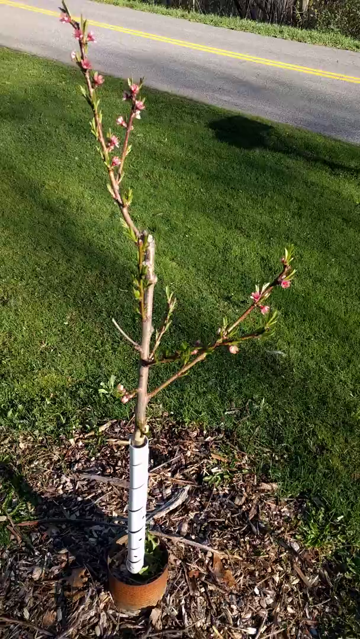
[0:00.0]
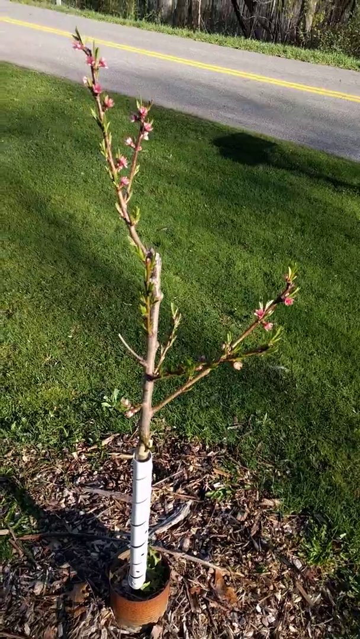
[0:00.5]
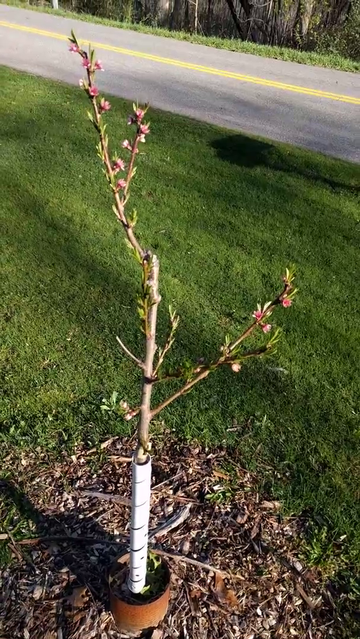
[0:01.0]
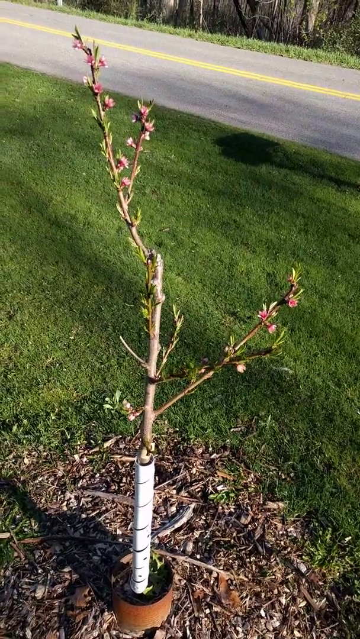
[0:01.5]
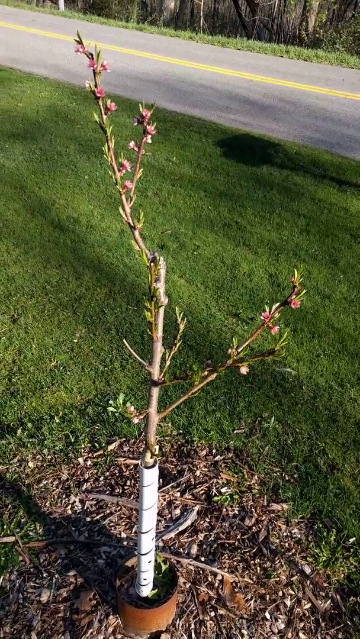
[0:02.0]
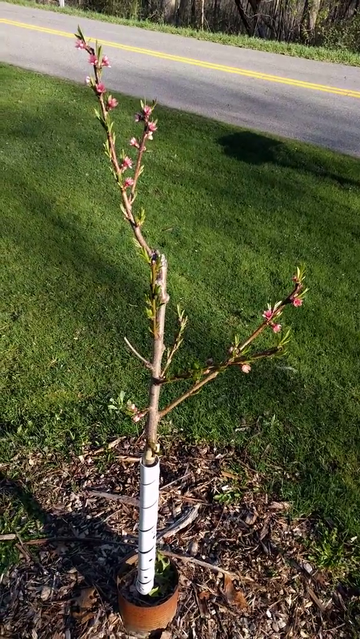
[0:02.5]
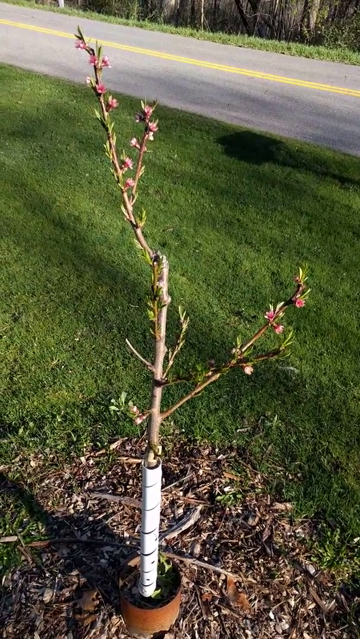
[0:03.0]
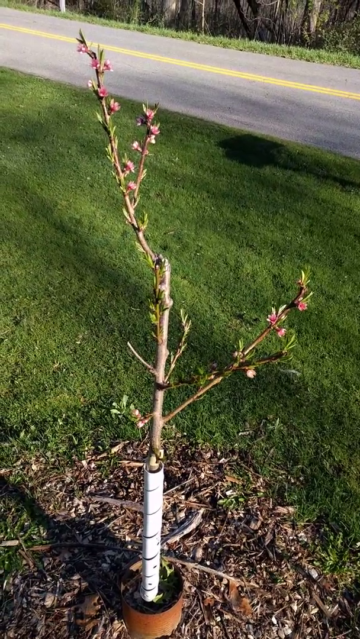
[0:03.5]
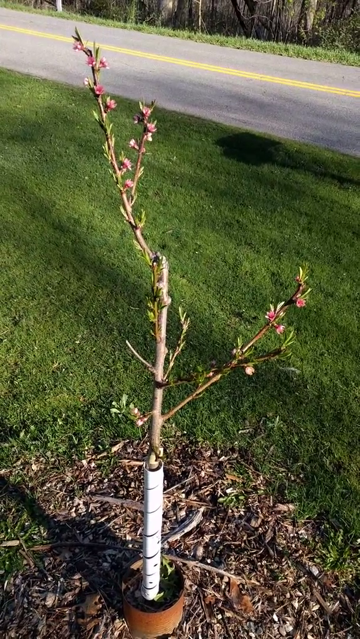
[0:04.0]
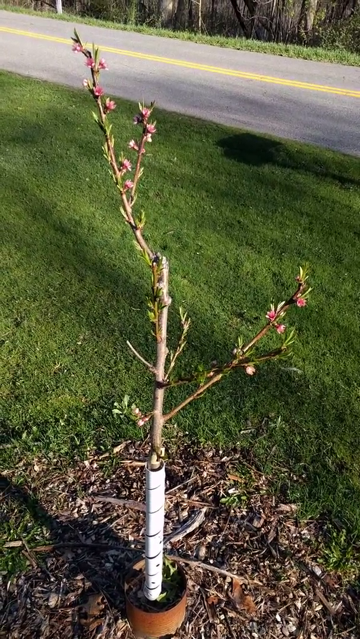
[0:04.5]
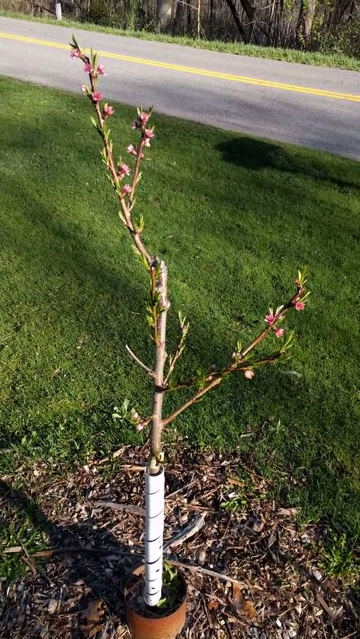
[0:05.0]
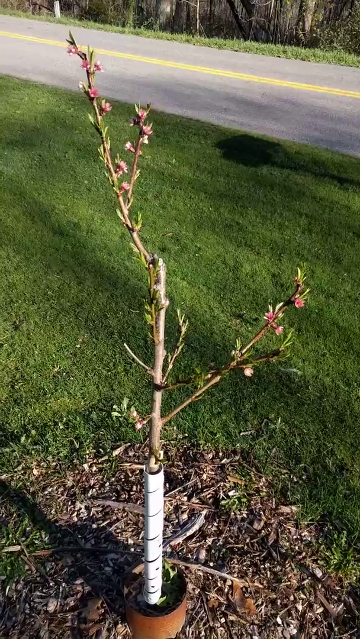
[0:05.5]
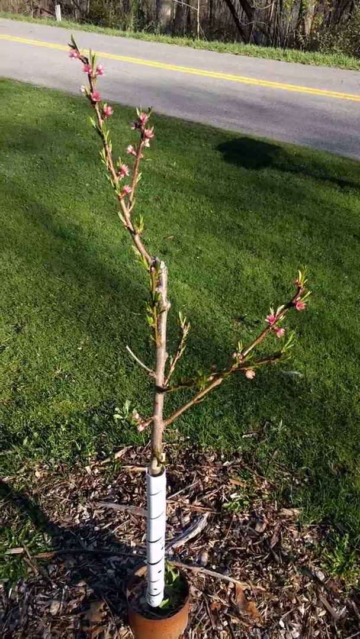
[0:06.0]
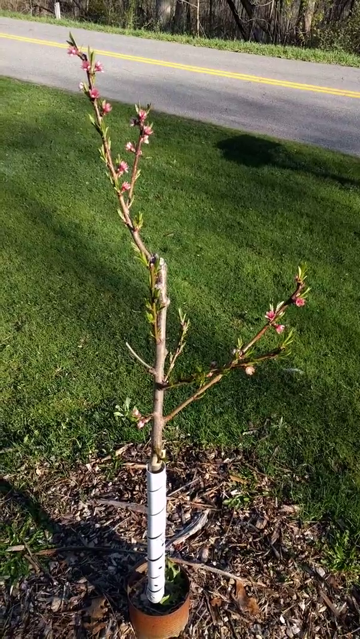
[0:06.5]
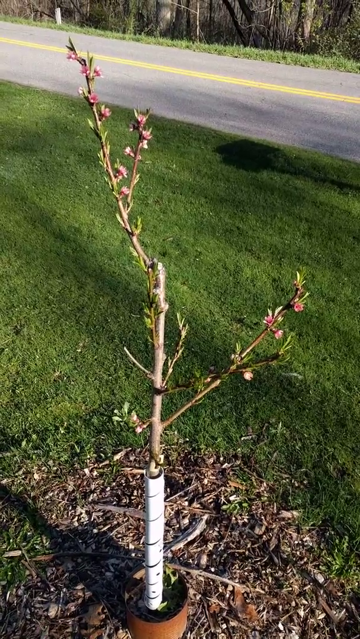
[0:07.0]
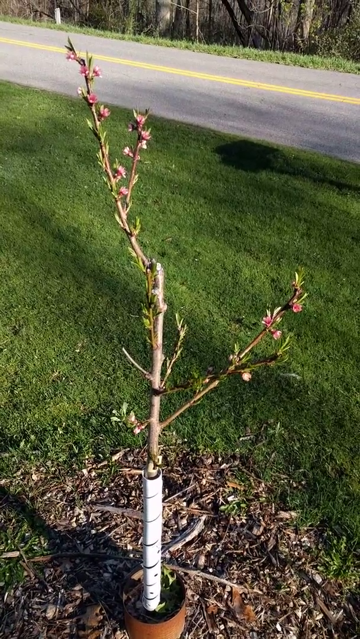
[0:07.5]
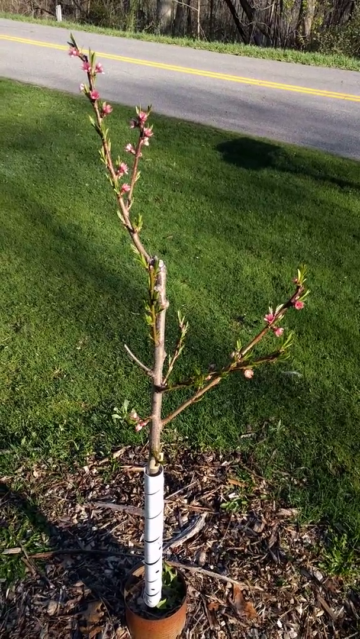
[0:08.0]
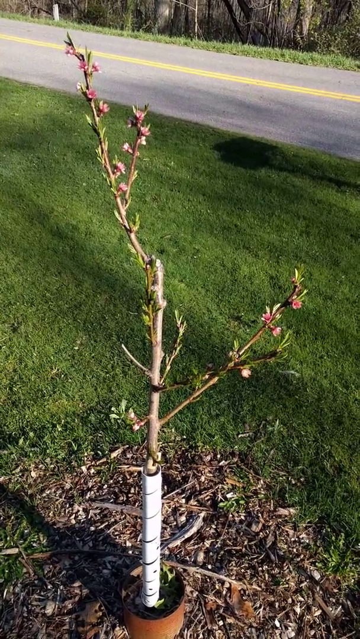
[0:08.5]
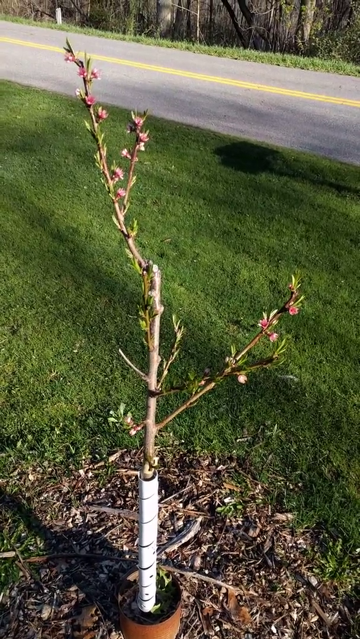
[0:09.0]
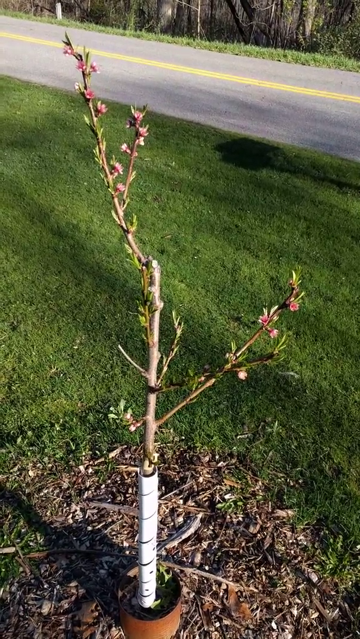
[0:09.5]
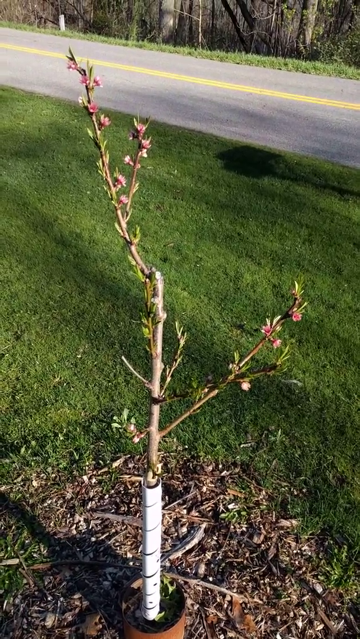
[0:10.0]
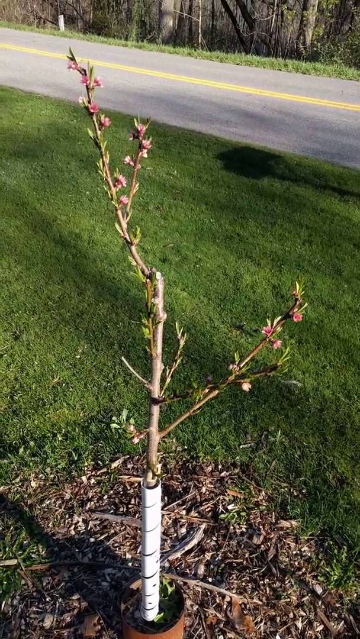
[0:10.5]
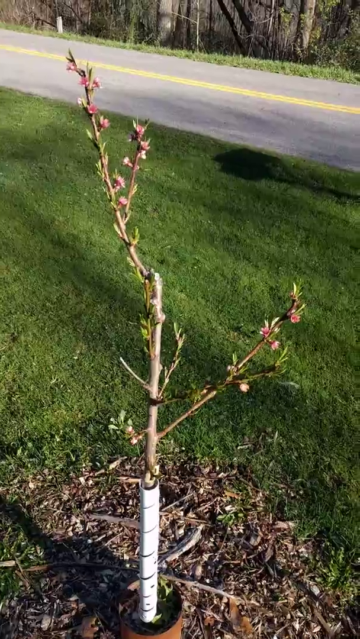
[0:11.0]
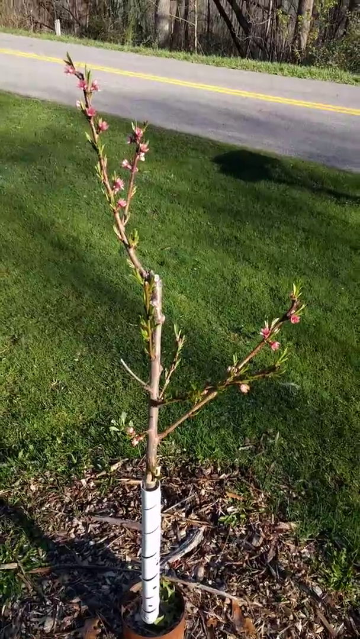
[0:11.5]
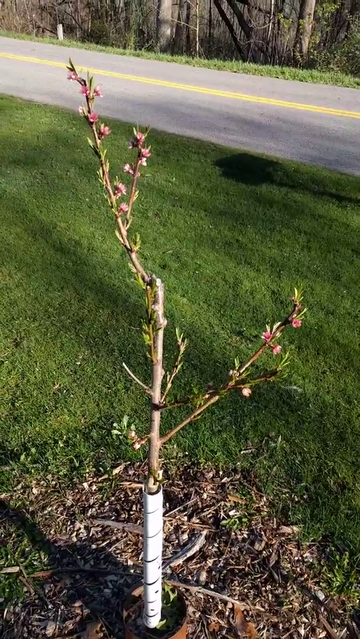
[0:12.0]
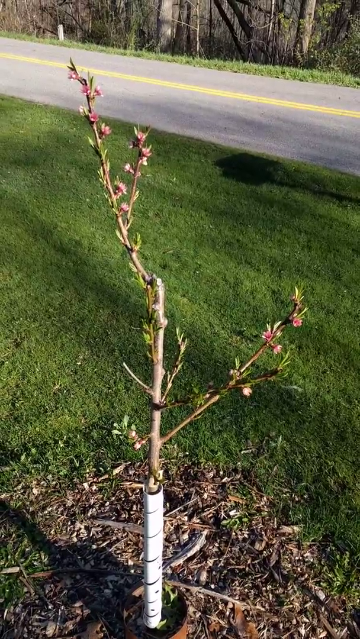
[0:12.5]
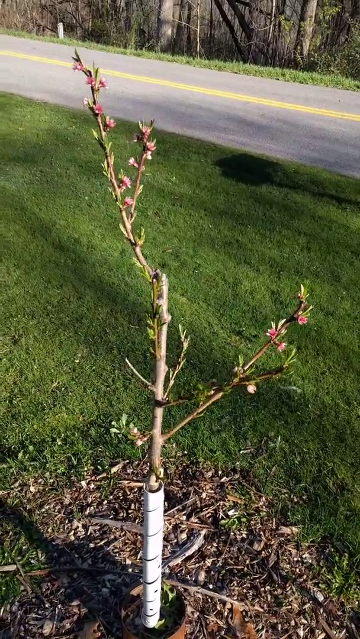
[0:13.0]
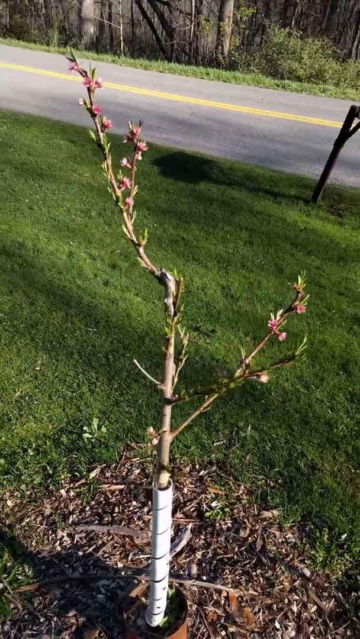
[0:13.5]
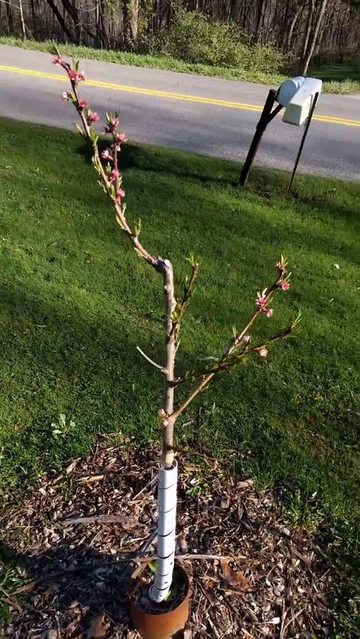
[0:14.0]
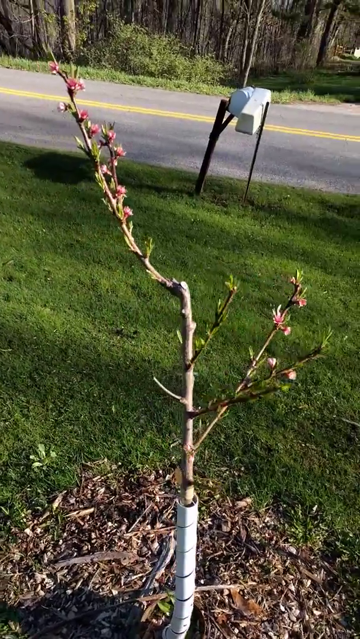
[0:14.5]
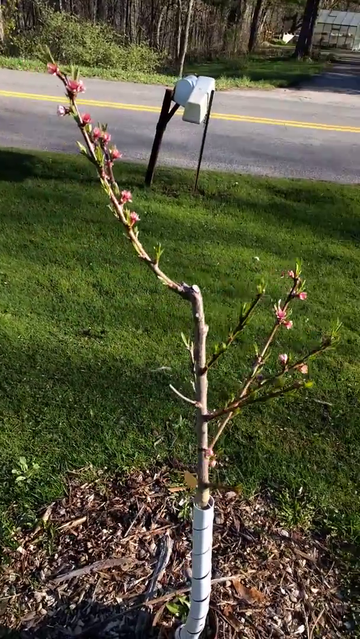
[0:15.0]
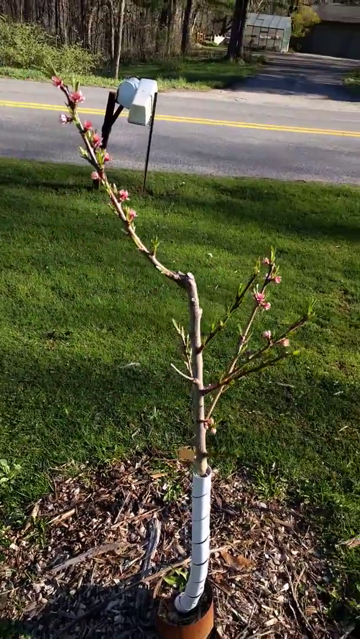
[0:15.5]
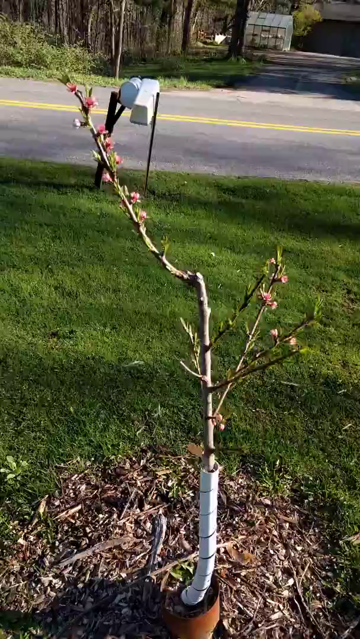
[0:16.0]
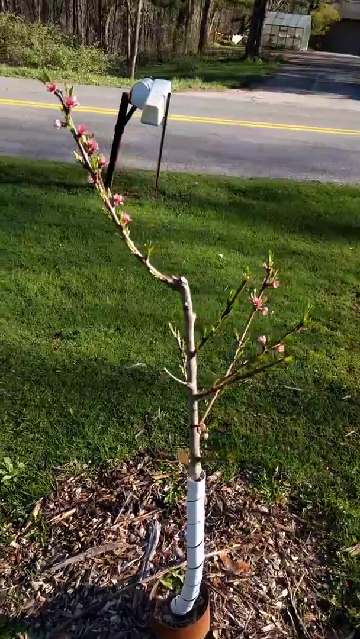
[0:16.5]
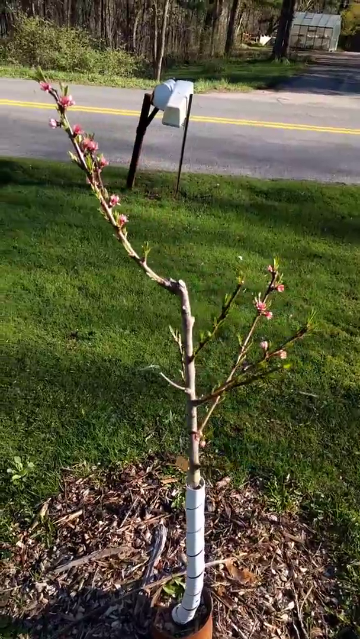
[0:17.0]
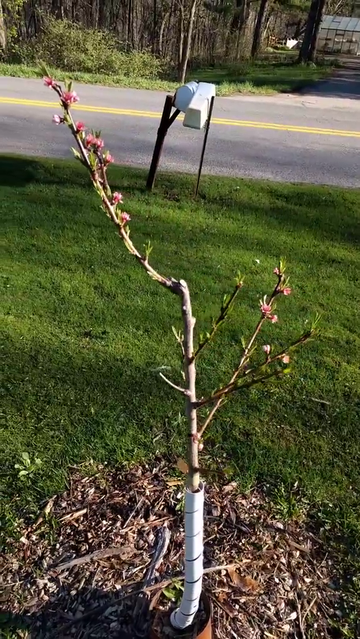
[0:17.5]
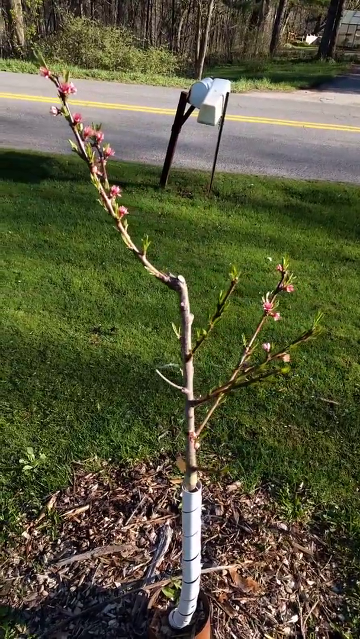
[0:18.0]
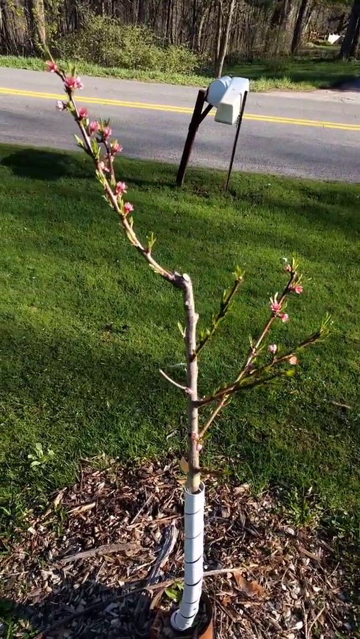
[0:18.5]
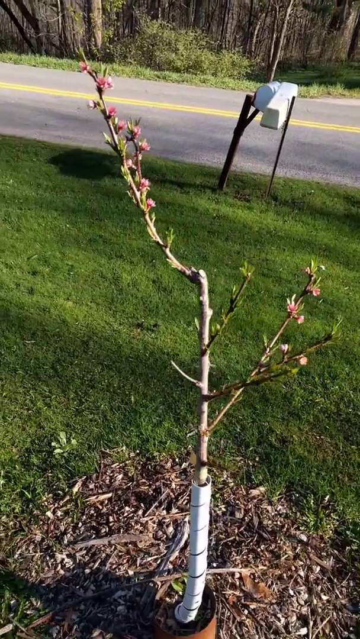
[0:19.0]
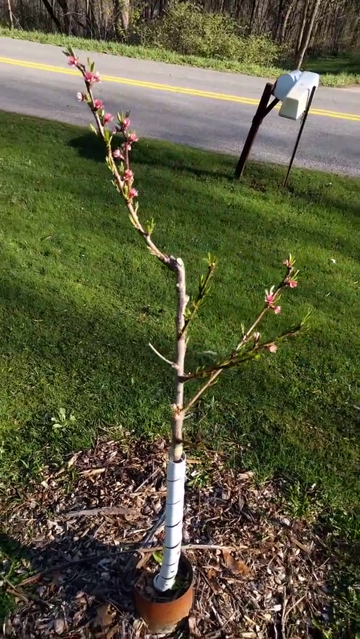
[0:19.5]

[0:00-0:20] A very low-quality, low-resolution mobile phone recording shows a tree planted in the ground, apparently in a pot. The person filming shows how the tree comes up out of the ground and its branches, on which little flowers are growing. Grass is behind the tree, along with a road. A post box for letters is also visible.